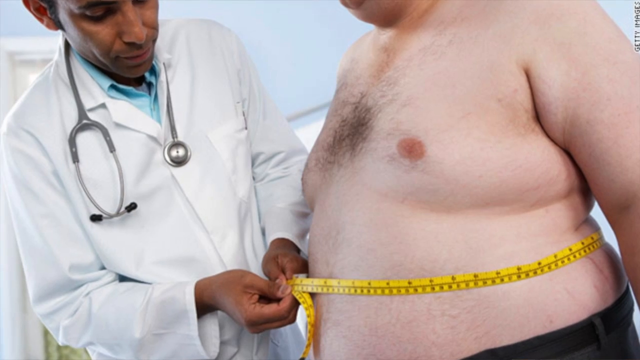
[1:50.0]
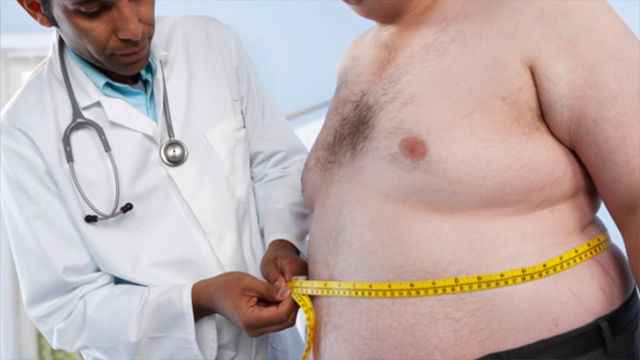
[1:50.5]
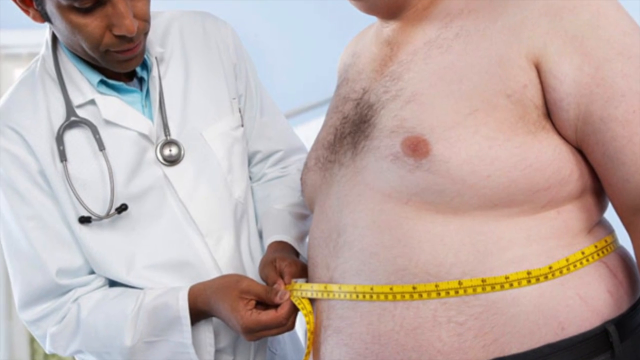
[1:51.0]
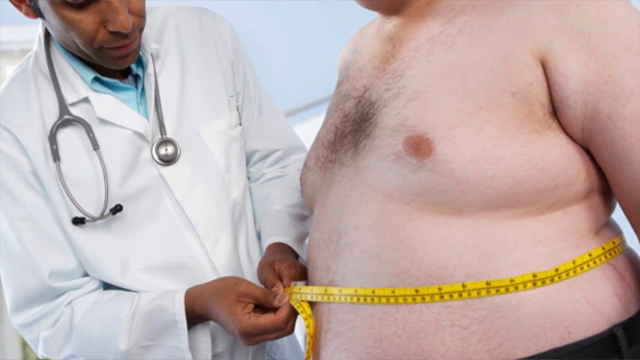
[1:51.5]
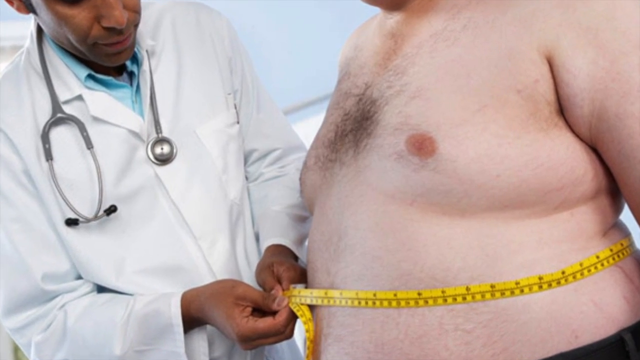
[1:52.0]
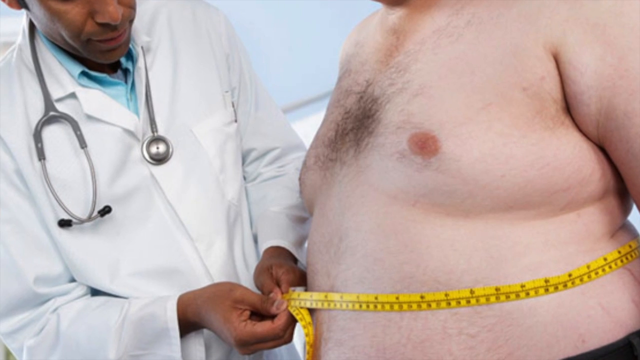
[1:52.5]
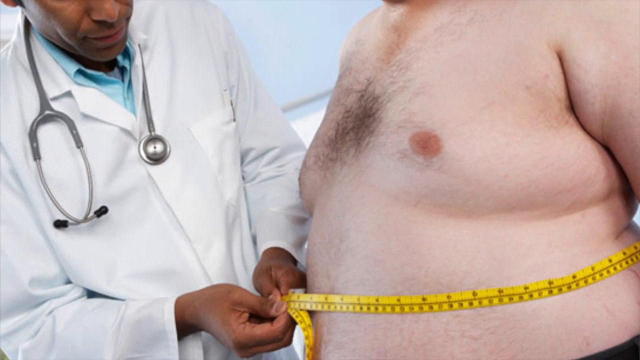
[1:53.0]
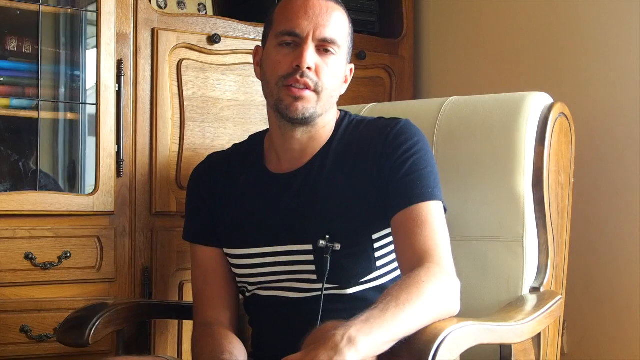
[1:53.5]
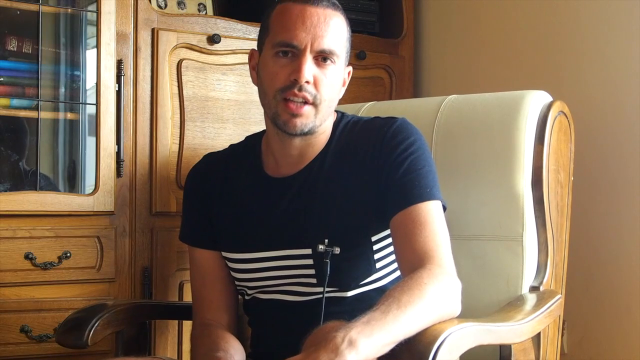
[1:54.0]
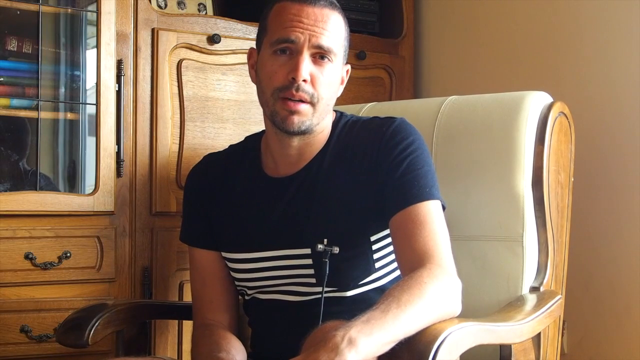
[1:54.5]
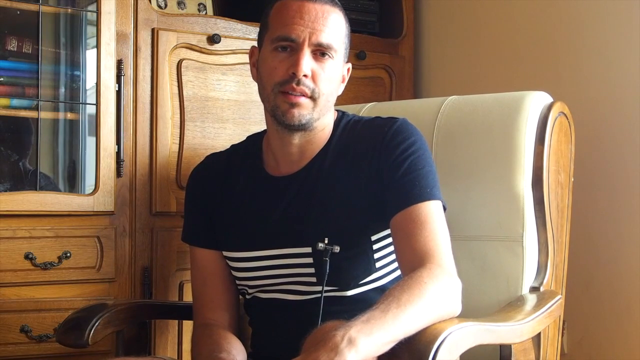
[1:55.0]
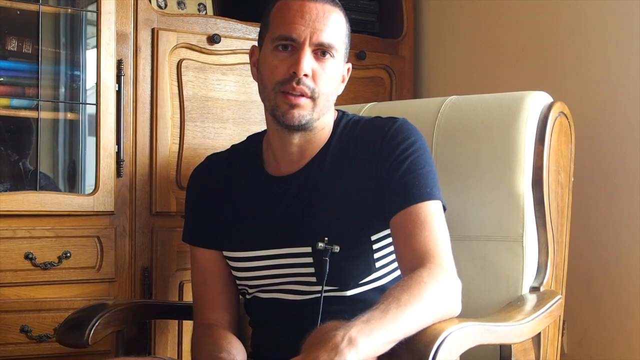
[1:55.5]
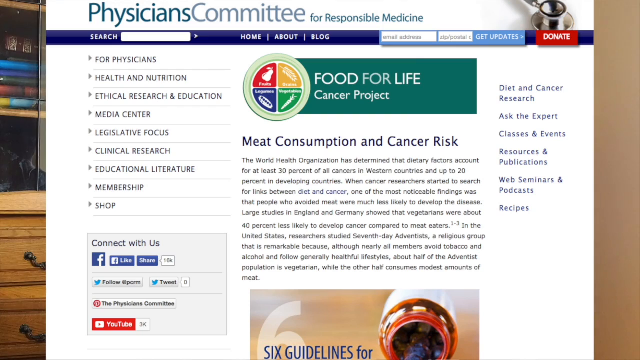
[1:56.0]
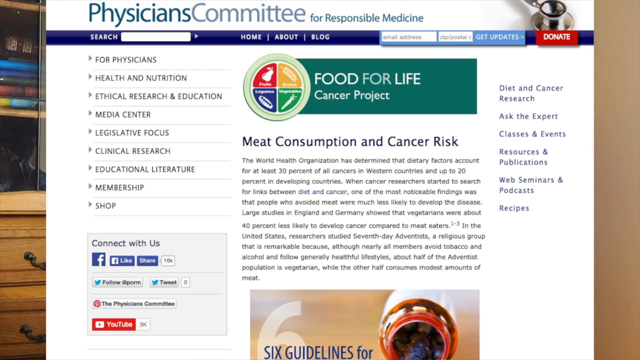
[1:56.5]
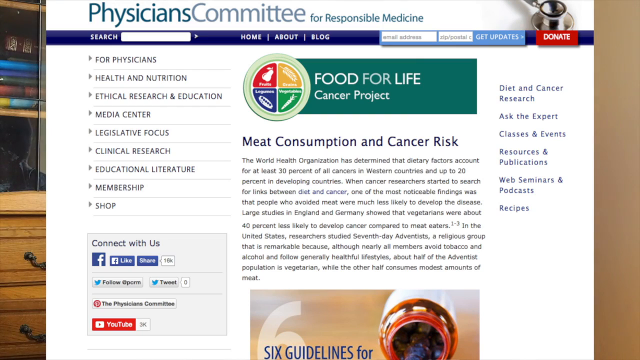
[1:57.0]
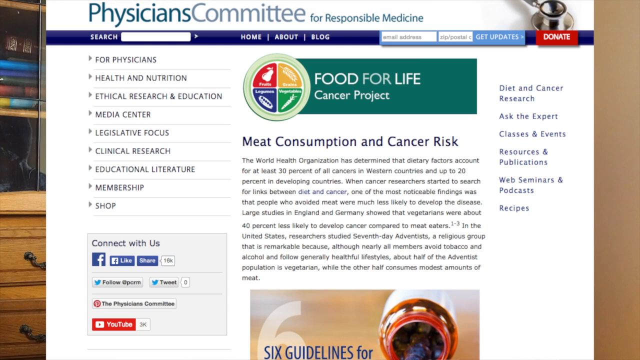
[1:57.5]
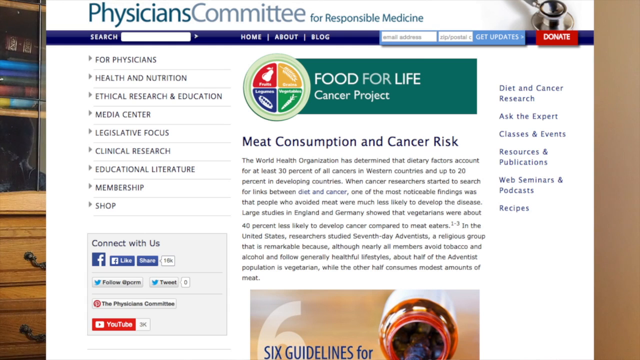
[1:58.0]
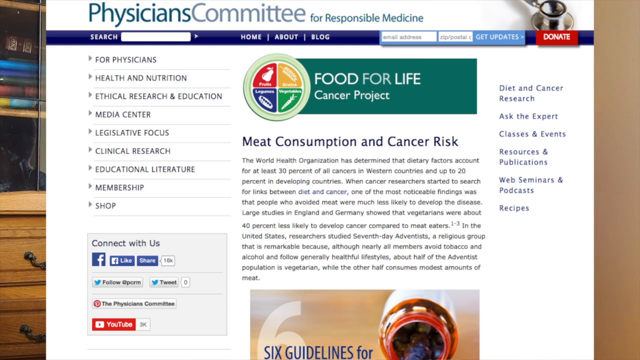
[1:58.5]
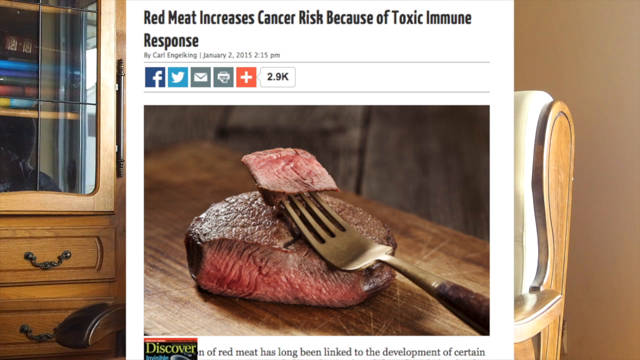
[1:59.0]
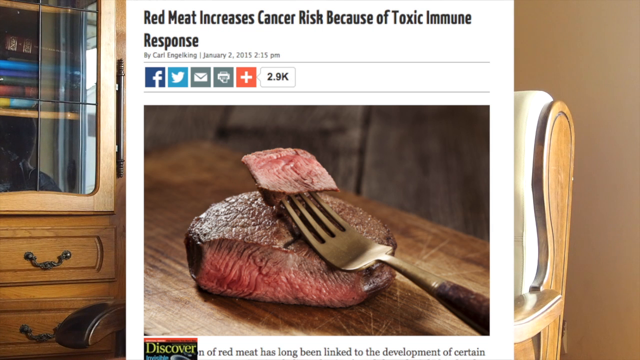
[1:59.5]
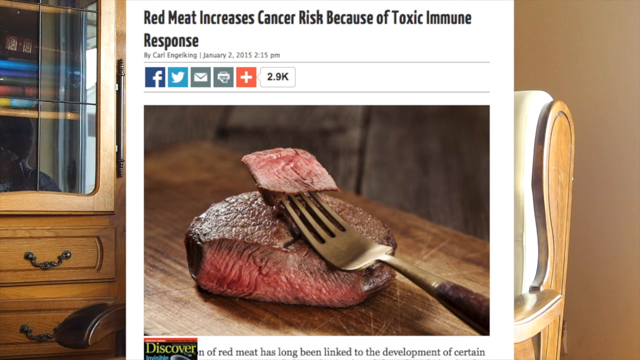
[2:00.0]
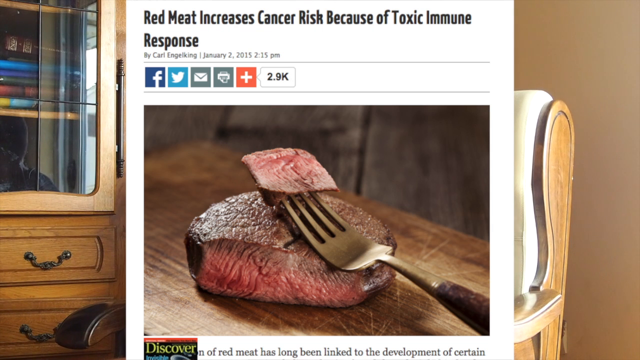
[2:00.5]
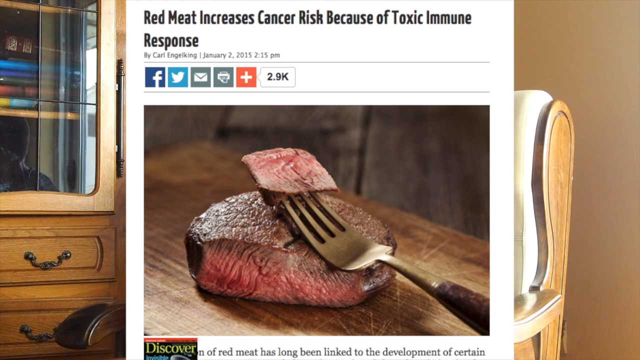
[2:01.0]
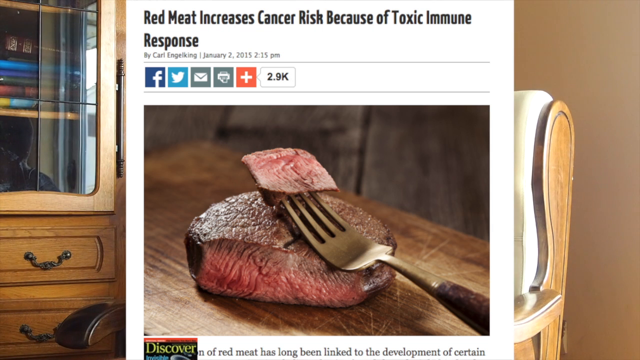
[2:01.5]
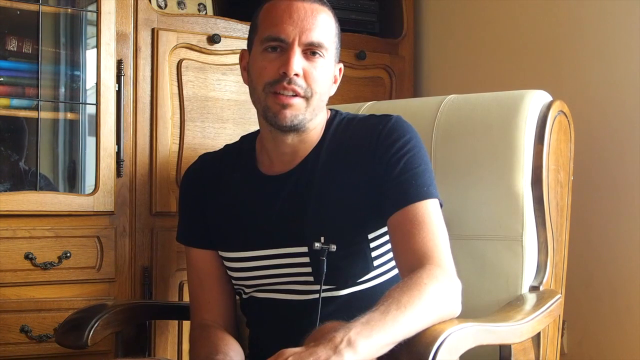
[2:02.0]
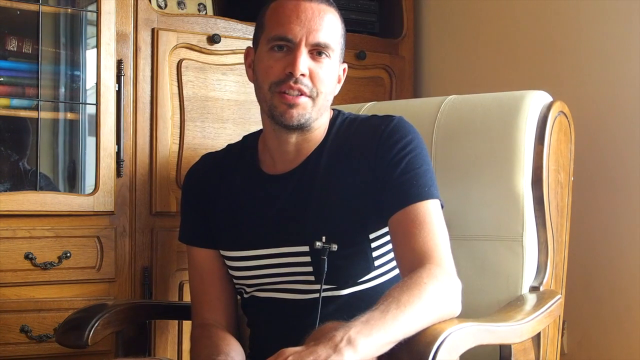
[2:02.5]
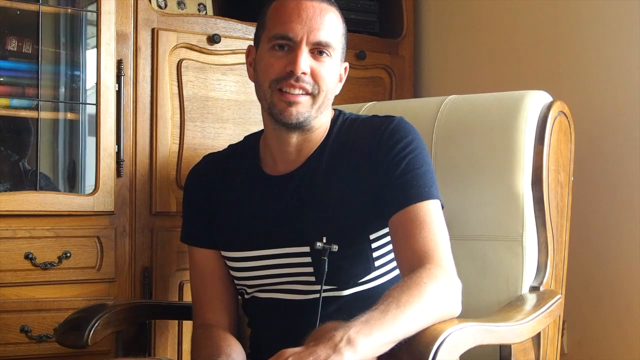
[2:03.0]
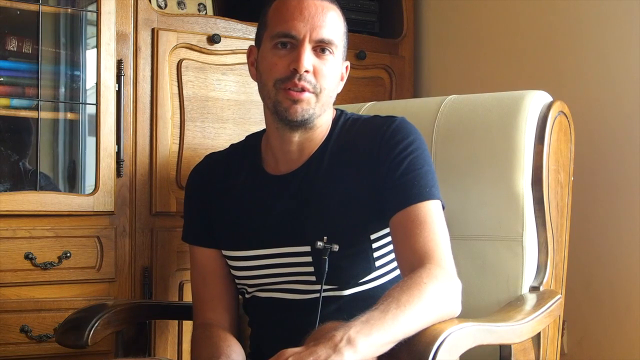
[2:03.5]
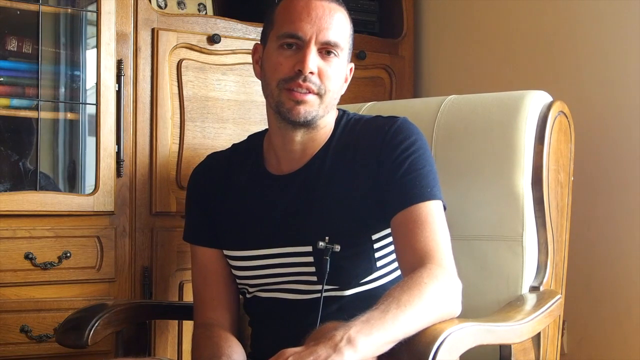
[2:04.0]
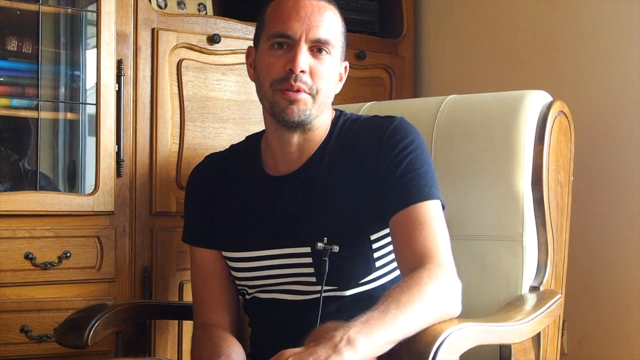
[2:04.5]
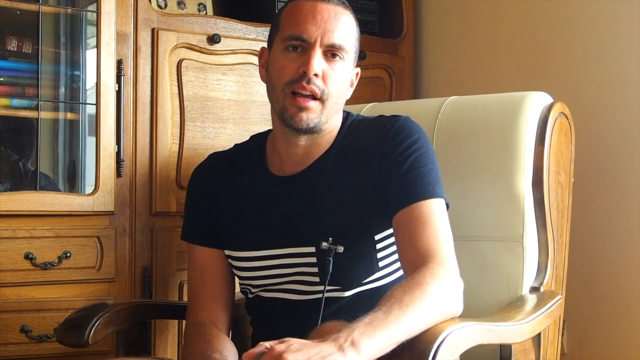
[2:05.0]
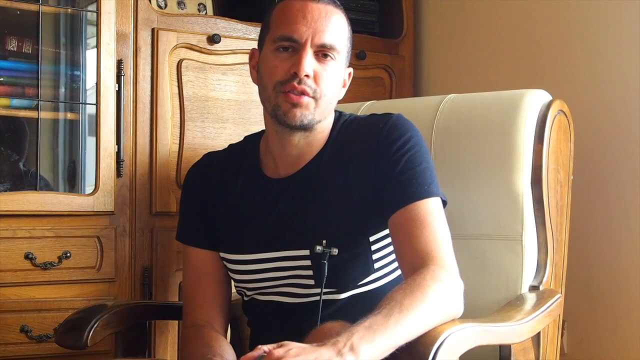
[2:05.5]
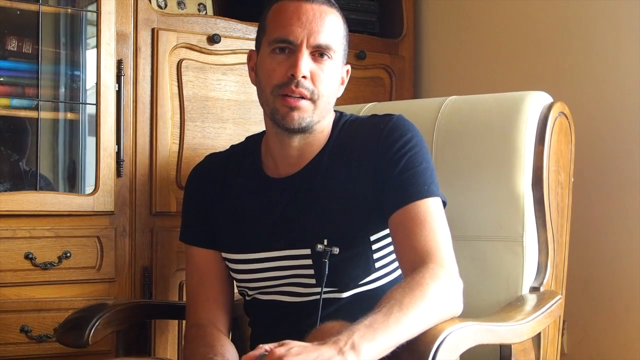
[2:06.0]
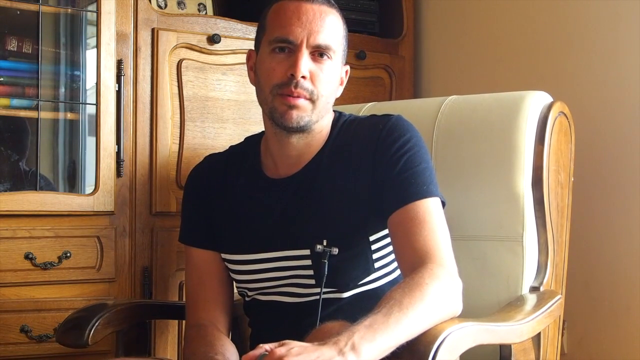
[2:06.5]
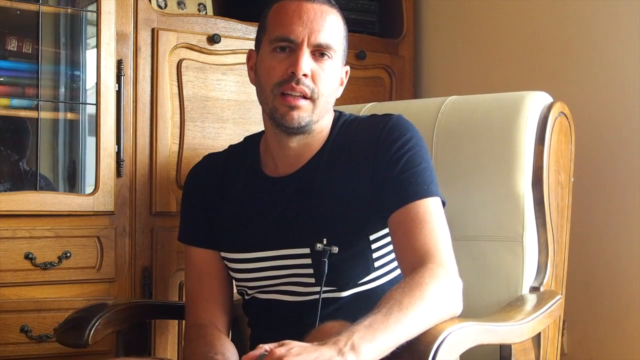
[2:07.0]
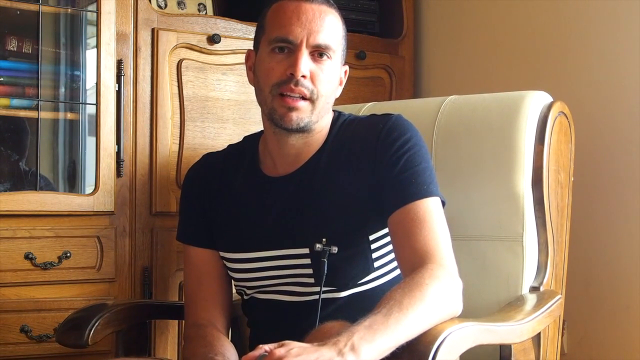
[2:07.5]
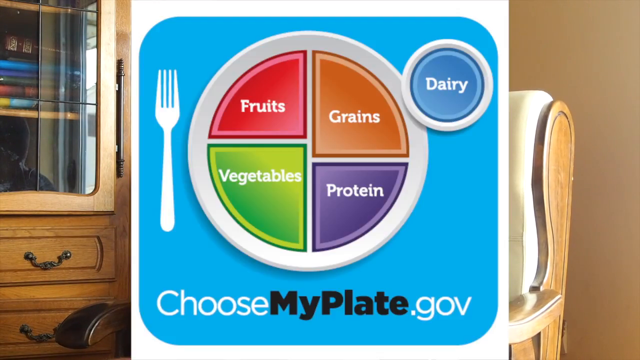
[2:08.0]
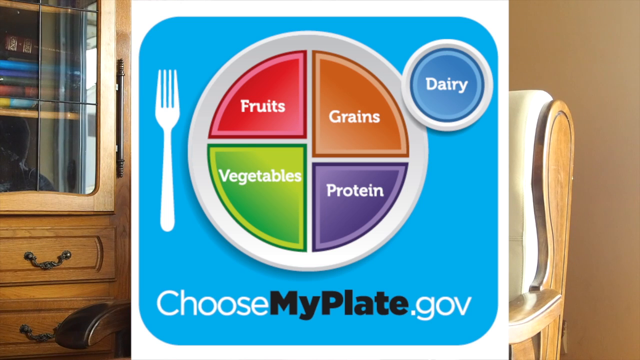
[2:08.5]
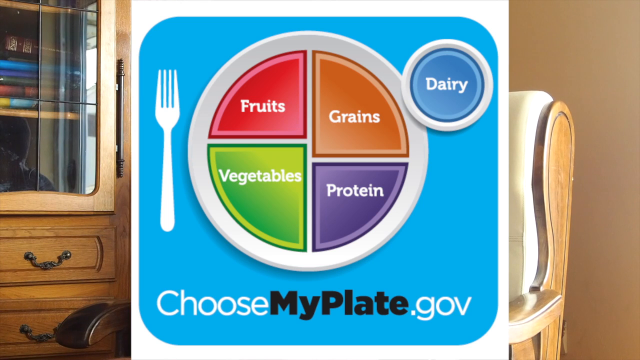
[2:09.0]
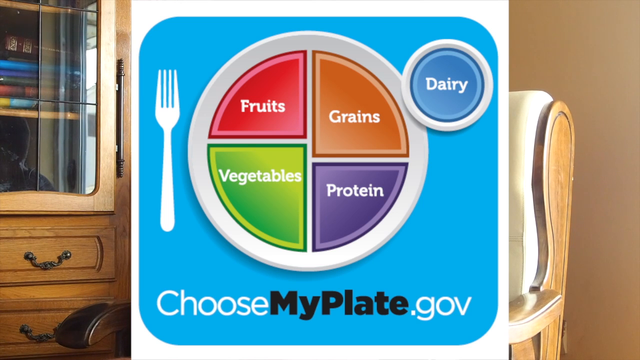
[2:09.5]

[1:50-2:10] On the left is a slender, dark-skinned man wearing a blue collared shirt with a doctor's jacket over it and a stethoscope around his neck. He is looking down towards his hands, which are down near his abdomen but held up against the abdomen of the man on the right, as he holds a yellow and black tape measure around the patient's abdomen. On the right is a very large man with Caucasian skin, seen from the shoulder to the waist, with a large amount of dark hair in the center of his chest and a large belly with the tape measure wrapped around it; the doctor is looking at the numbers. The man in the white chair is then shown speaking to the camera again. Next is a website with "Physicians Committee for Responsible Medicine" at the top, on an article titled "Food for Life Cancer Project, Meat Consumption and Cancer Risk". Another article from the internet follows, reading at the top "red meat increases cancer risk because of toxic immune response", with a photograph underneath of a small circle of steak on a wooden surface and a fork on top holding a cut piece of the steak. The man speaks to the camera again, and then an illustration or image appears with "ChooseMyPlate.gov" at the bottom and a white plate above it. The plate is cut into four uneven portions: the top left is red and says "fruits", the upper right is orange and says "grains", the bottom left is green and says "vegetables", and the bottom right is purple and says "protein". Fruits and protein are the two smaller portions, vegetables is the biggest, followed by grains. To the left of the plate is a white fork and to the right is a white cup labeled "dairy". The background for all of this is blue, and it is superimposed on top of the man speaking in the white chair.